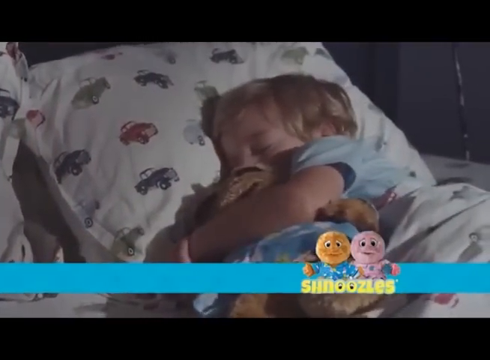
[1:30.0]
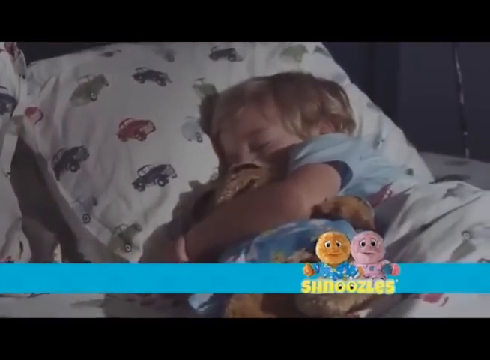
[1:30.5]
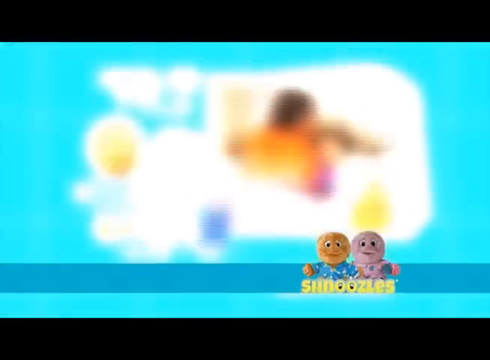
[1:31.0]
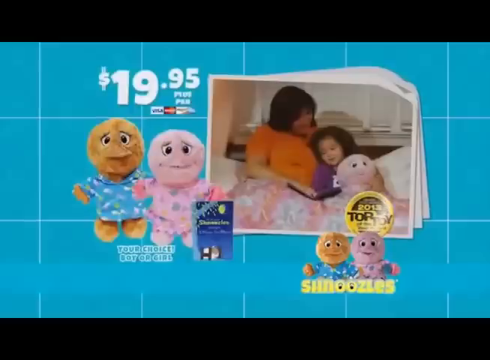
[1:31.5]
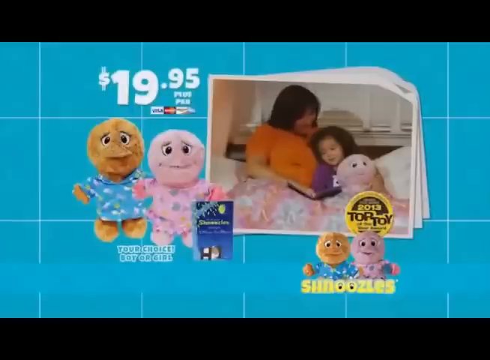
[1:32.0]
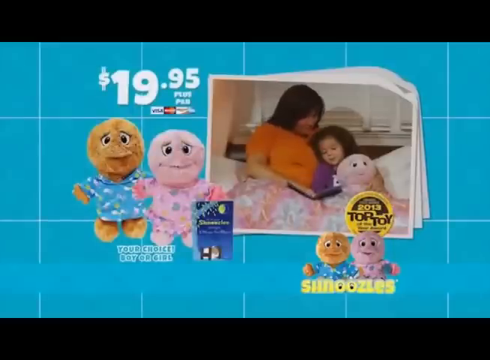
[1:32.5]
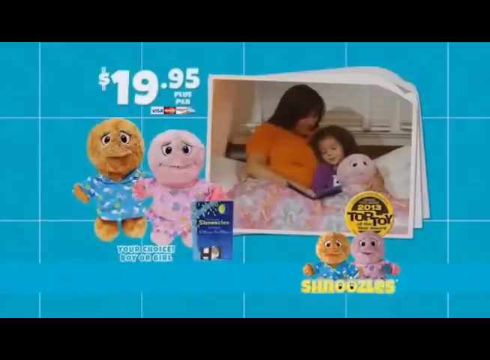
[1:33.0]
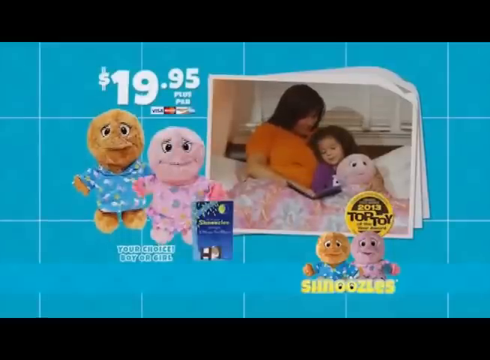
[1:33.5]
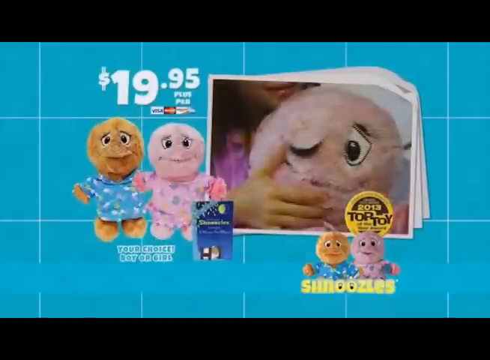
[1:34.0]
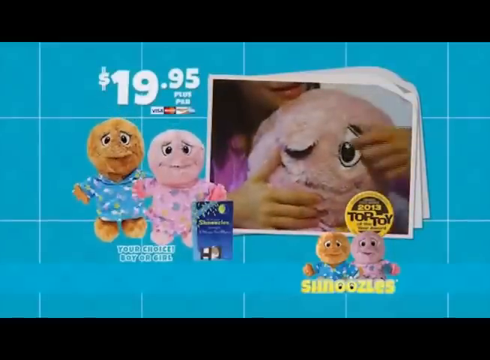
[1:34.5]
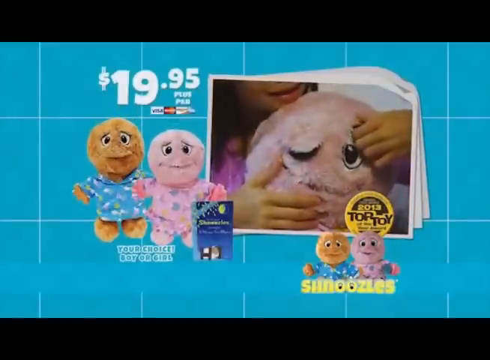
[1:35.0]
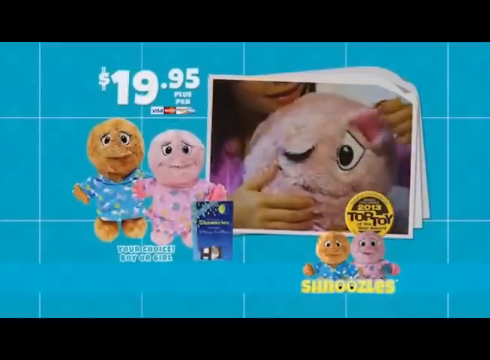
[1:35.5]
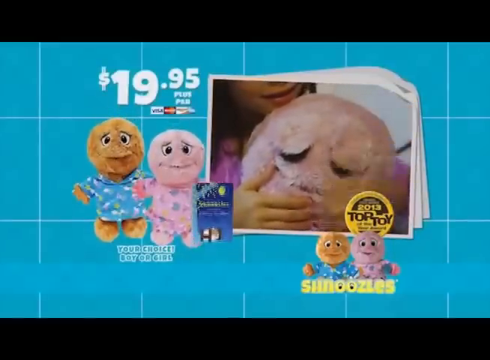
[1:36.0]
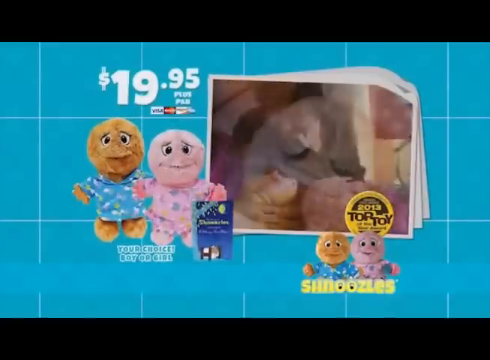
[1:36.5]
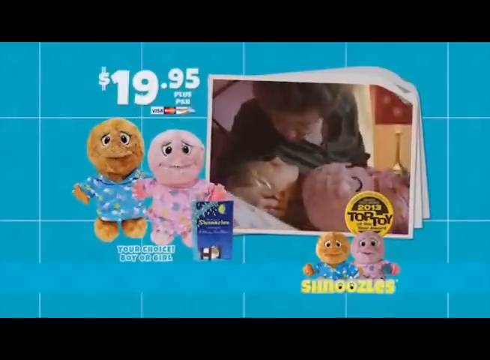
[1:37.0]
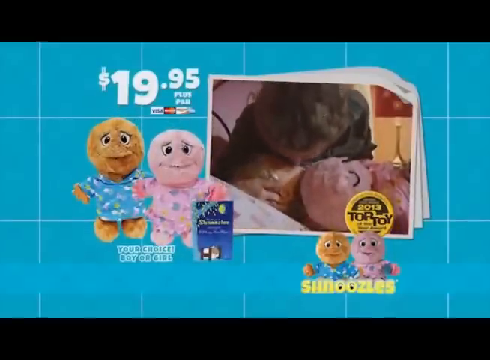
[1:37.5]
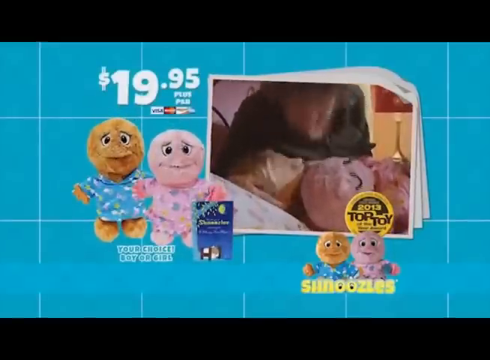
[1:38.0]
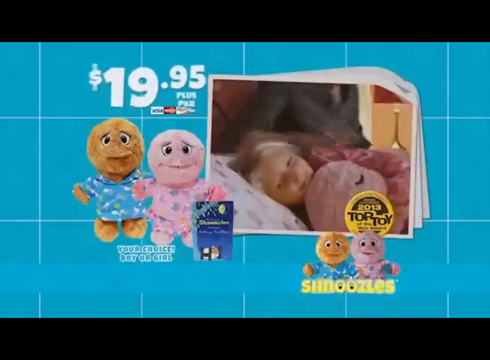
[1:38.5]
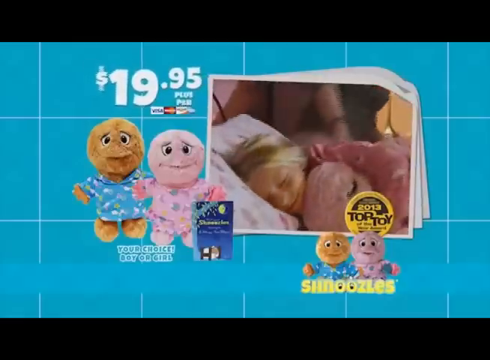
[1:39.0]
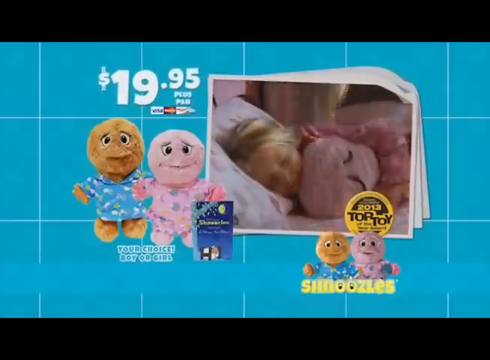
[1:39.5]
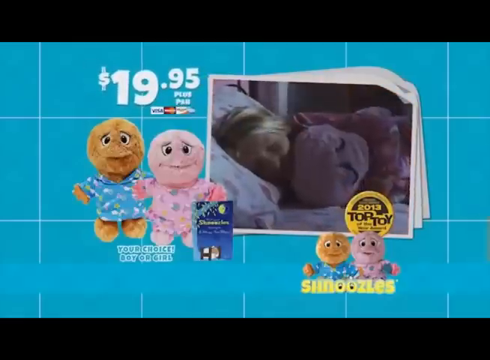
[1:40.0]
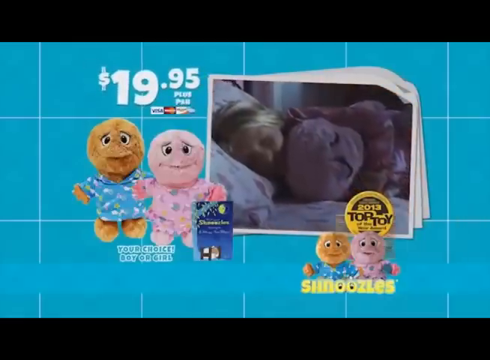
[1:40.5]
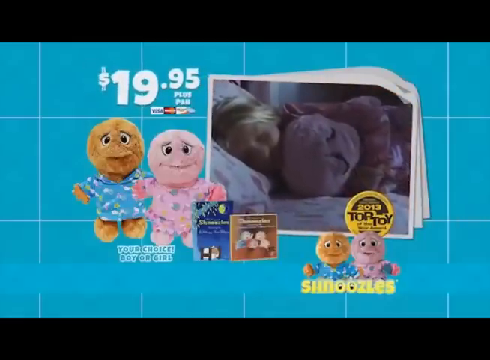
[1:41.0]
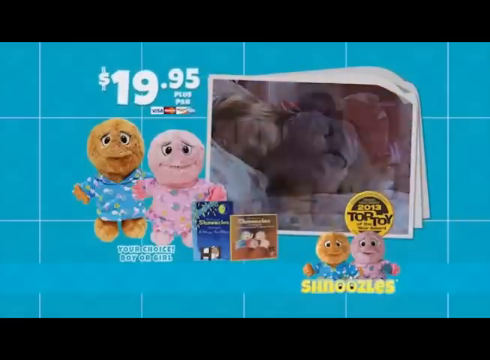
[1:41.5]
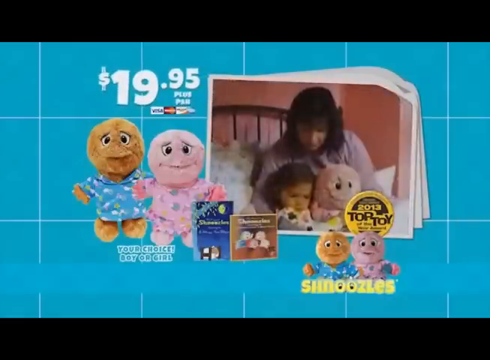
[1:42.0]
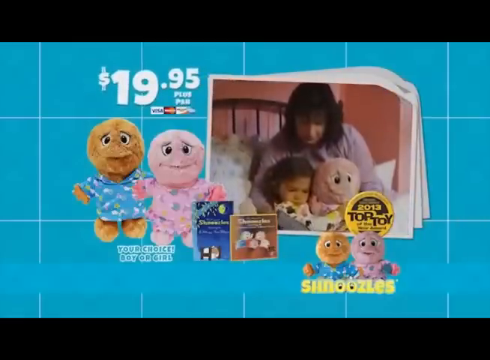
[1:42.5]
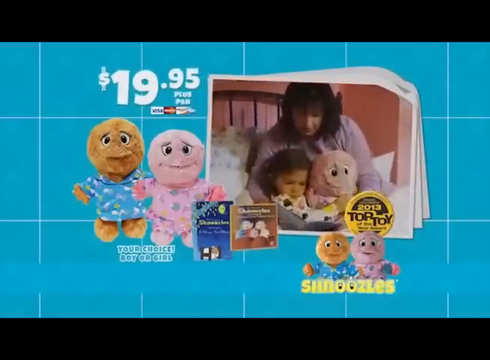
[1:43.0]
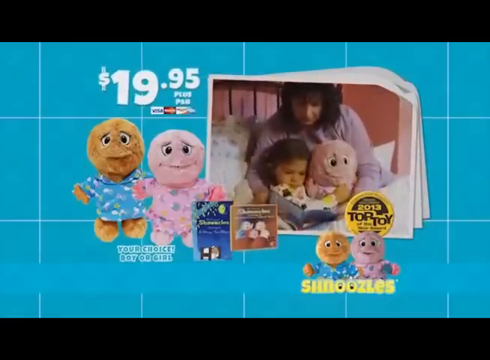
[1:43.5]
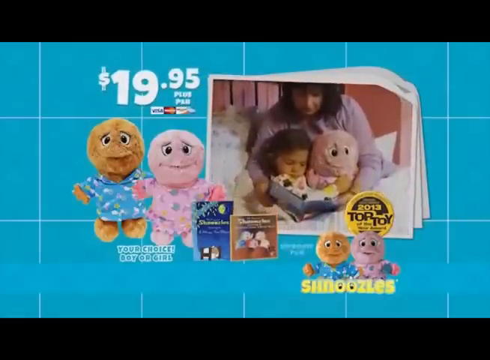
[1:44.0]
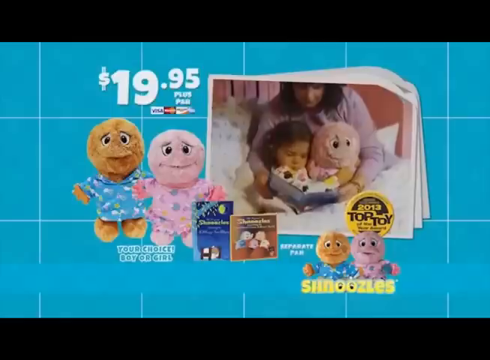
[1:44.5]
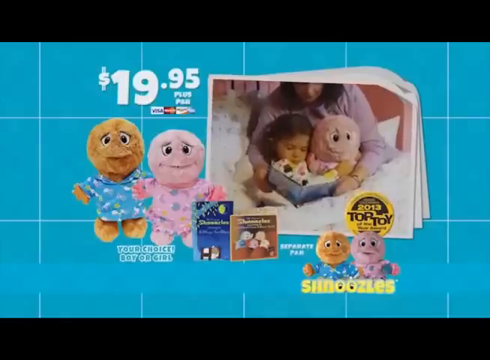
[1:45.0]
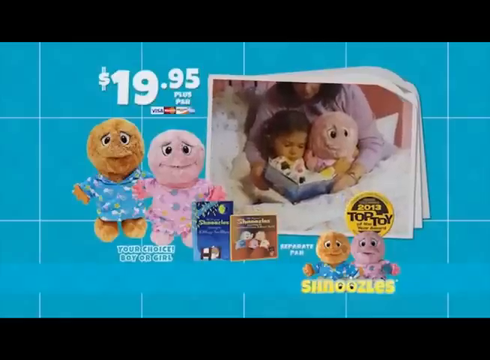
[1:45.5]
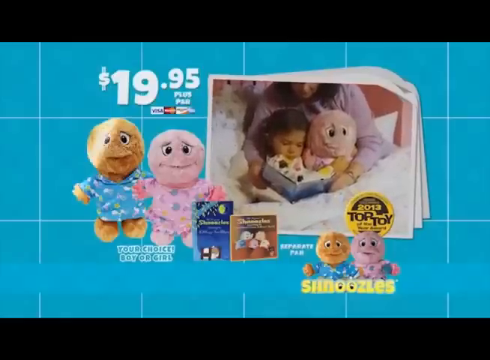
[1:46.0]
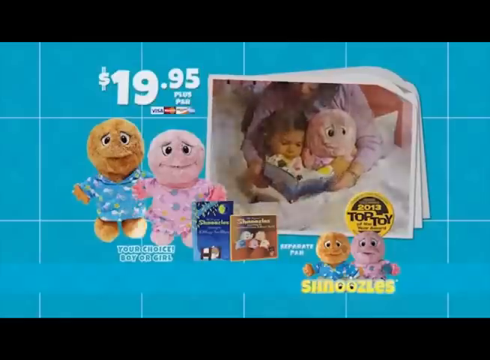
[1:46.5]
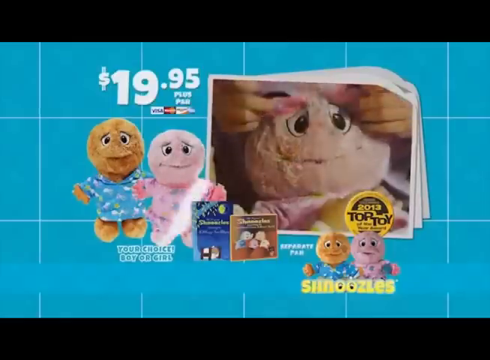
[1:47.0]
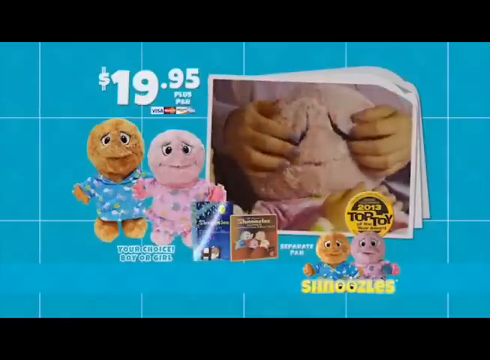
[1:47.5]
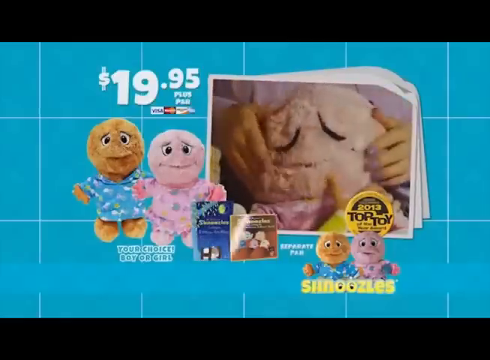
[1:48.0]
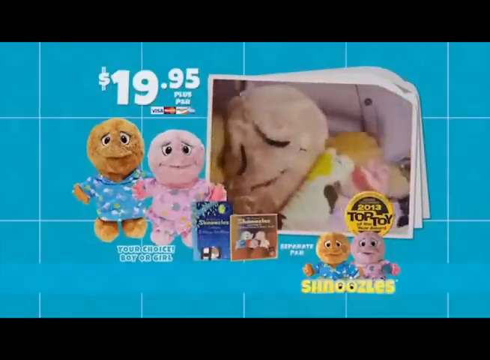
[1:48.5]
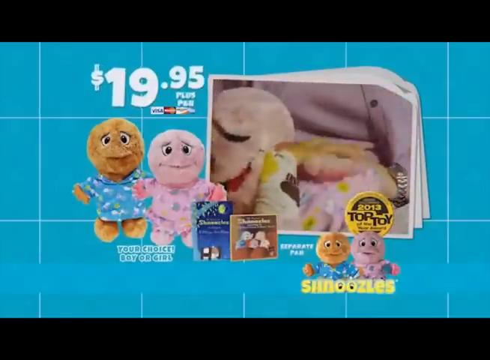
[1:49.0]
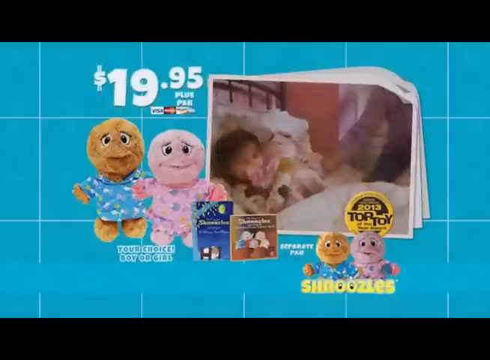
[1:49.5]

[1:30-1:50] A little boy sleeps with his shnoozle on a pillow covered with lots of toy cars. The ad then shows the price of a shnoozle as "$19.95 plus shipping and handling", with pictures of some of the kids from the video in the background. It shows that it is a "2013 top toy" and says "your choice", that you can order boy or girl. The shnoozles are kind of jumping in the background, and a woman who looks like a grandma bends down and kisses her grandchild. A book also kind of hops up and down in the background. The "$19.95" price keeps moving toward the camera, getting bigger, and then shrinking back to its normal size.